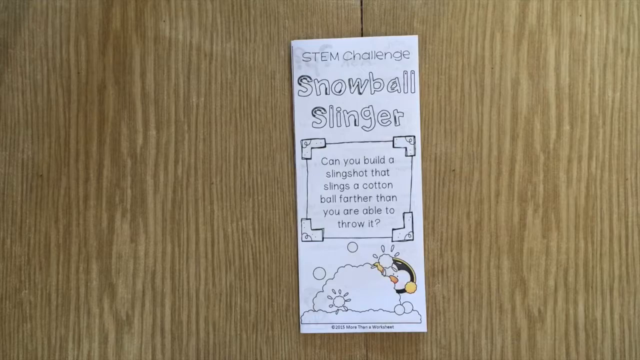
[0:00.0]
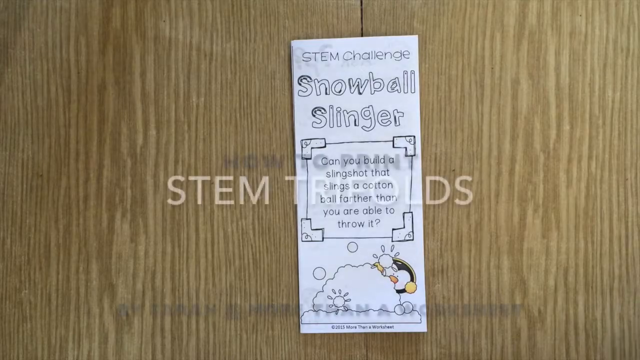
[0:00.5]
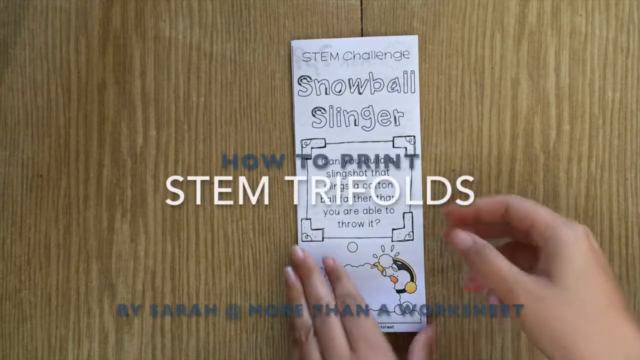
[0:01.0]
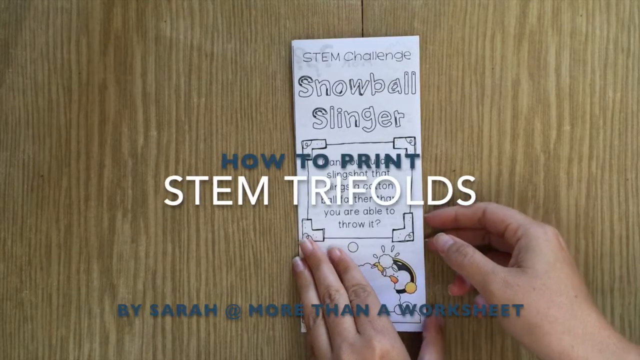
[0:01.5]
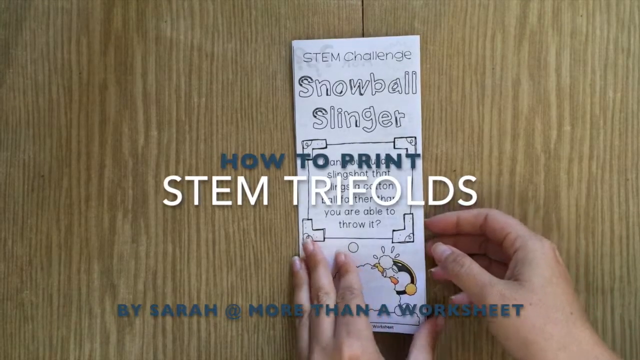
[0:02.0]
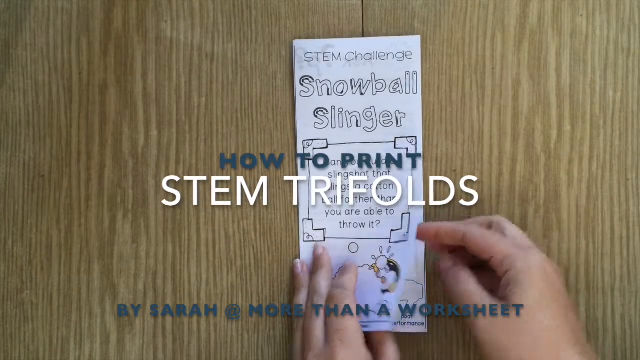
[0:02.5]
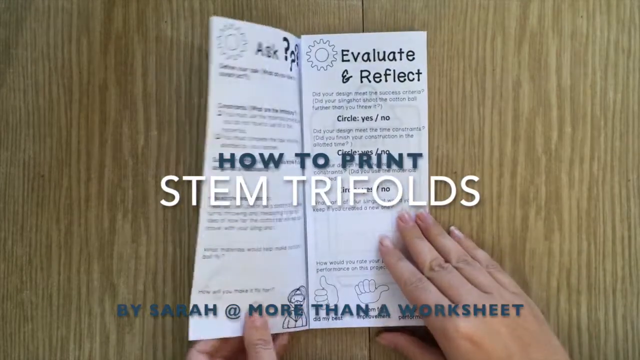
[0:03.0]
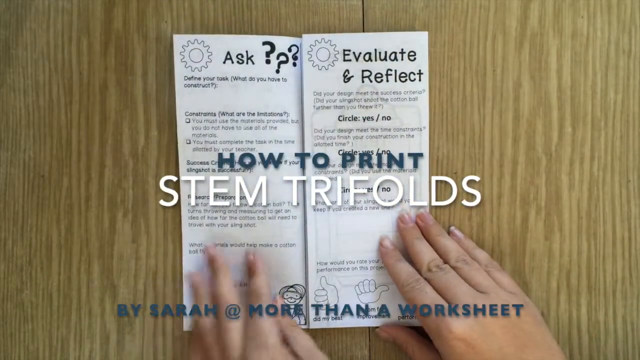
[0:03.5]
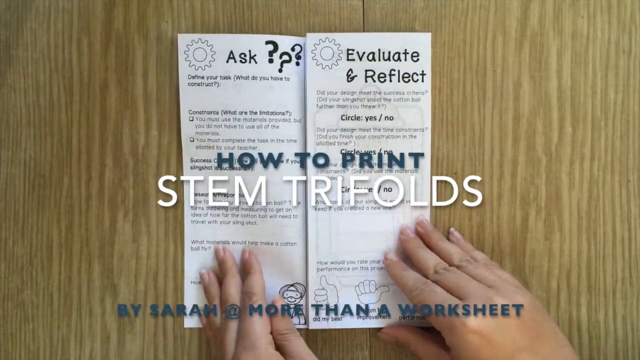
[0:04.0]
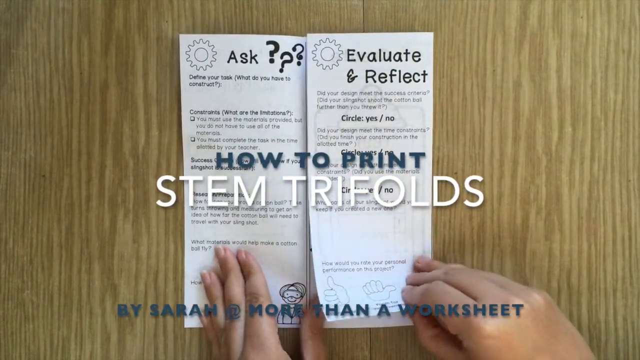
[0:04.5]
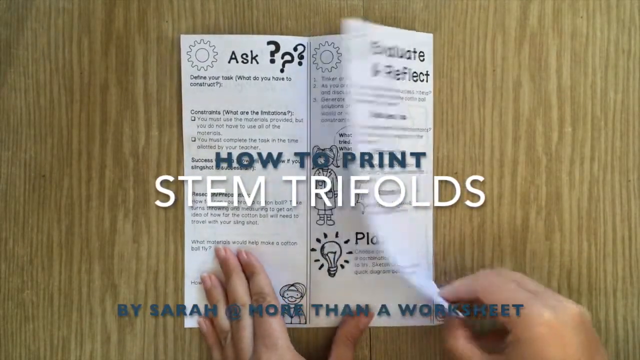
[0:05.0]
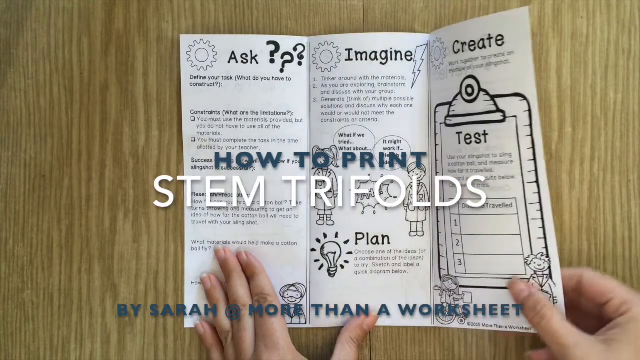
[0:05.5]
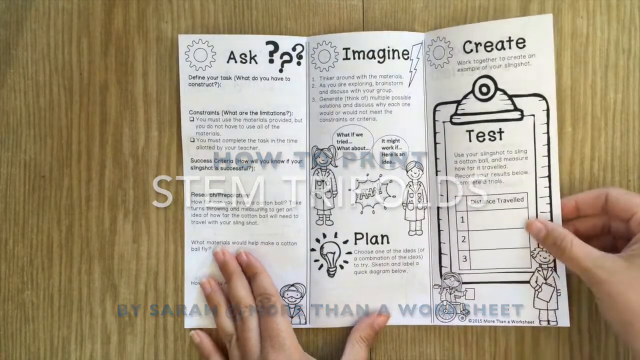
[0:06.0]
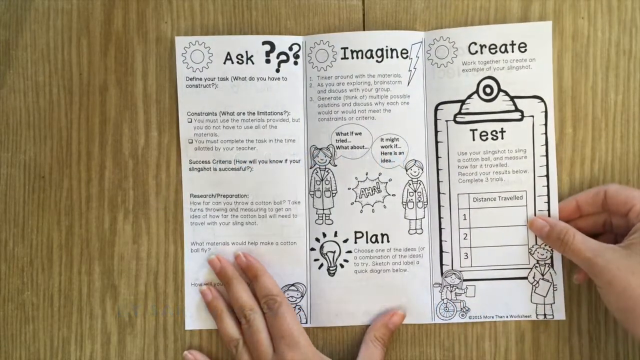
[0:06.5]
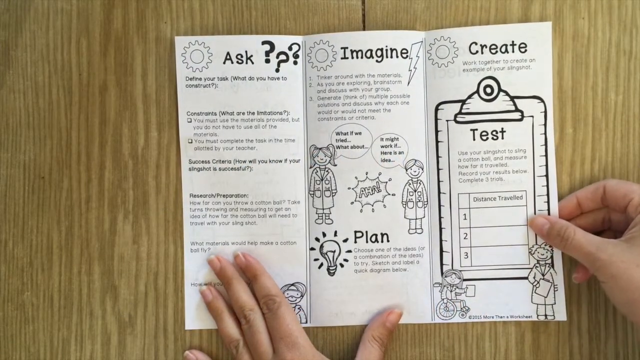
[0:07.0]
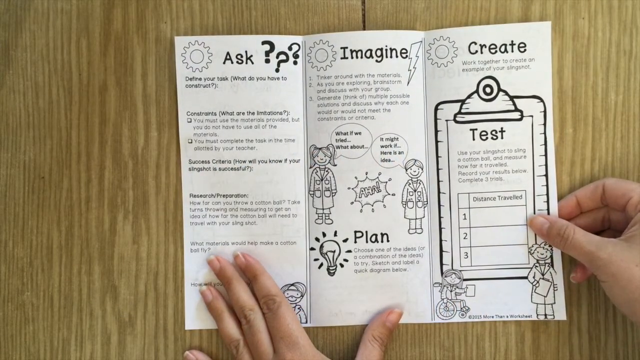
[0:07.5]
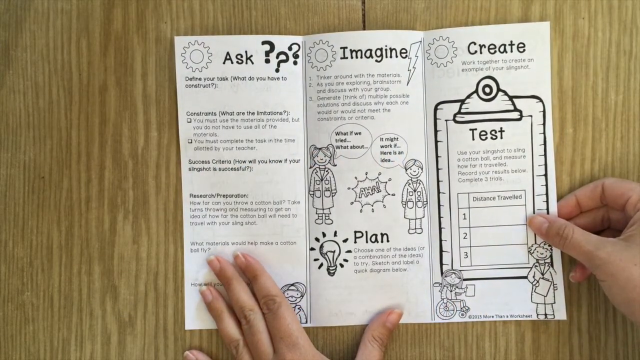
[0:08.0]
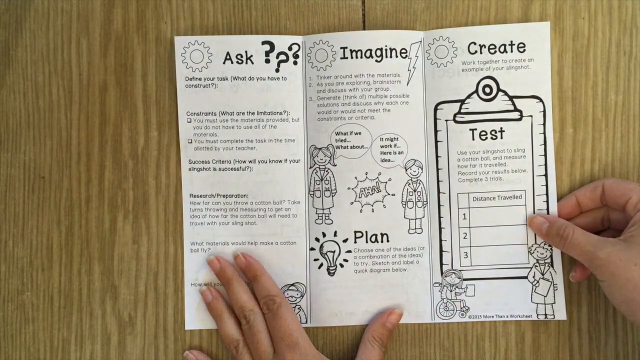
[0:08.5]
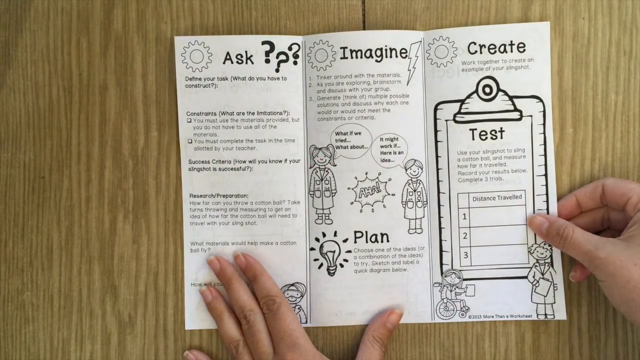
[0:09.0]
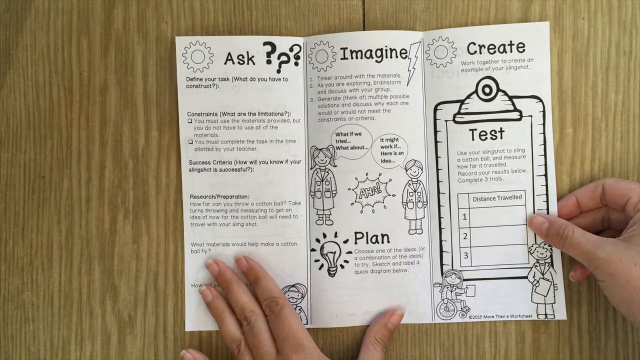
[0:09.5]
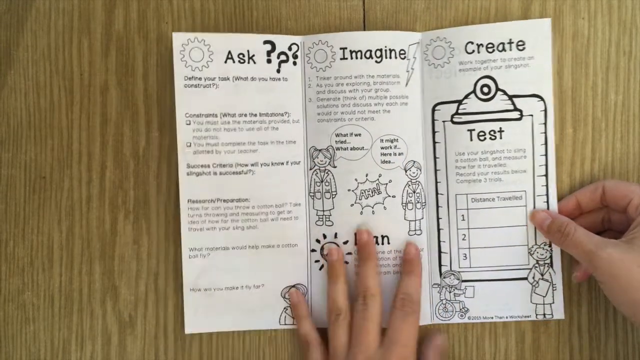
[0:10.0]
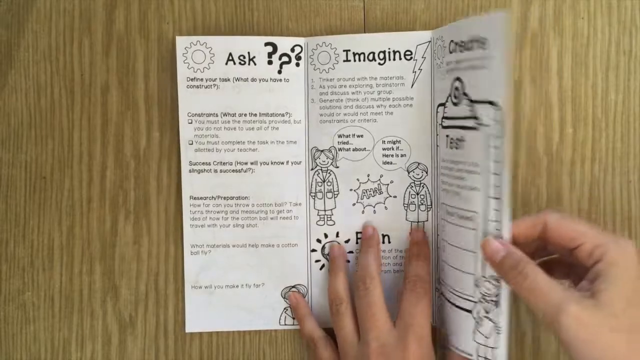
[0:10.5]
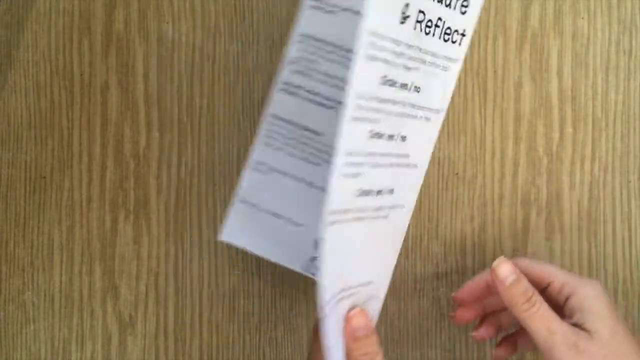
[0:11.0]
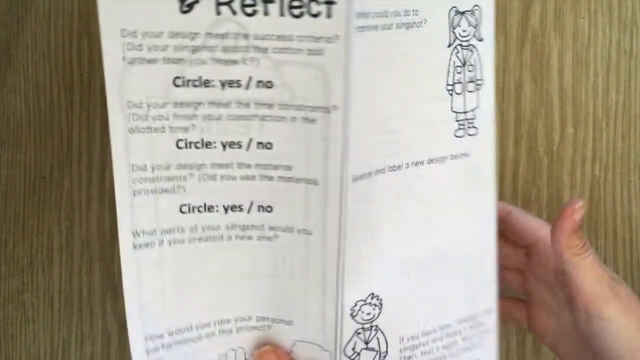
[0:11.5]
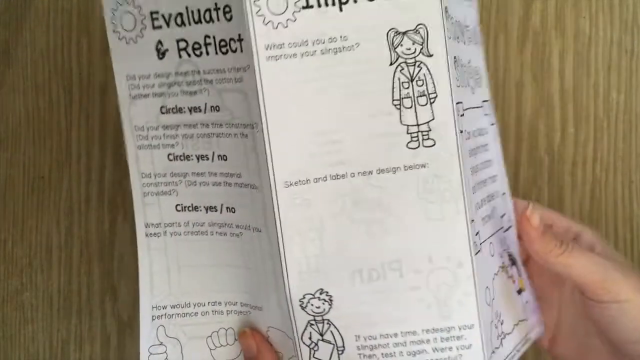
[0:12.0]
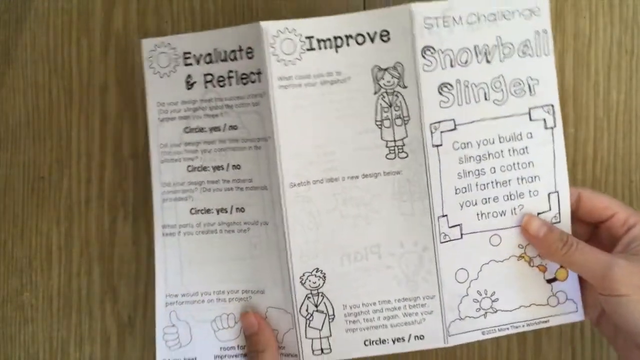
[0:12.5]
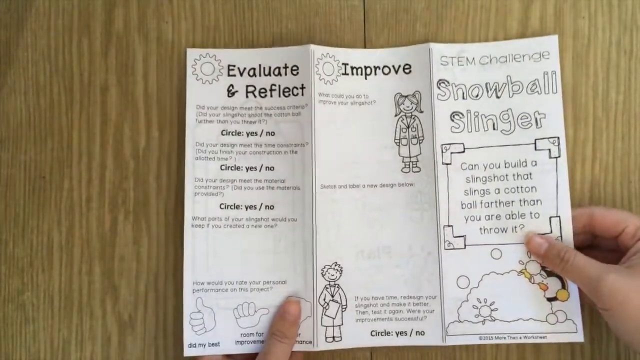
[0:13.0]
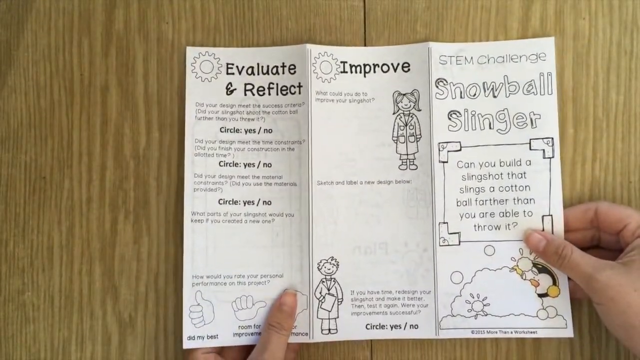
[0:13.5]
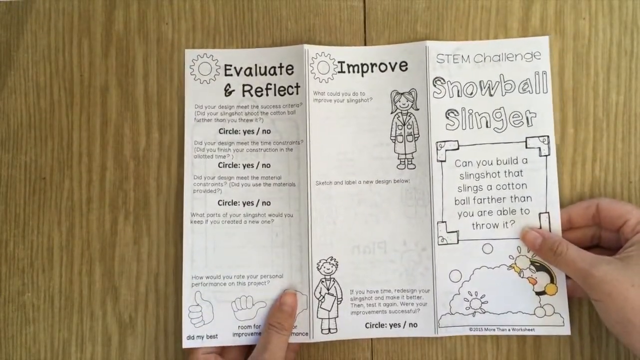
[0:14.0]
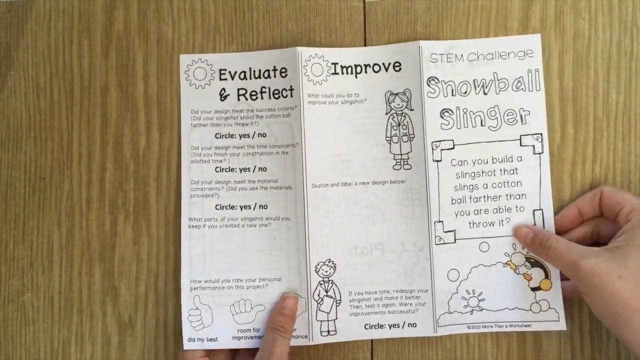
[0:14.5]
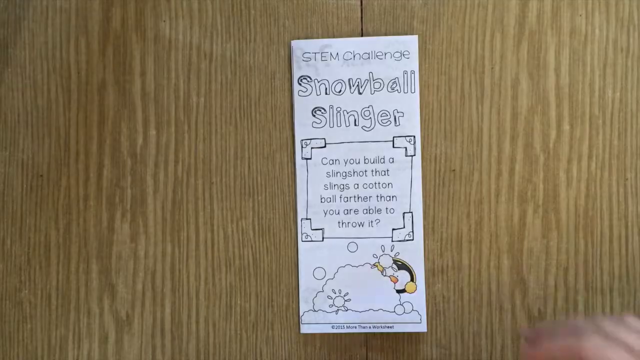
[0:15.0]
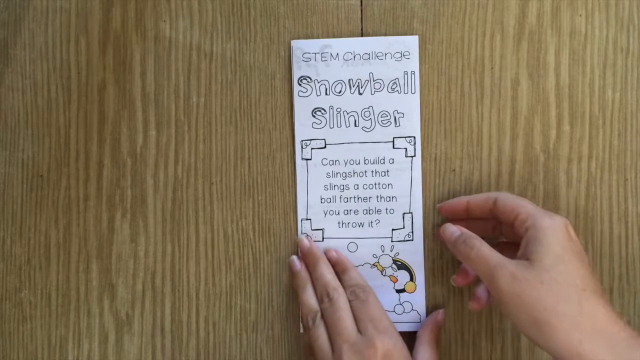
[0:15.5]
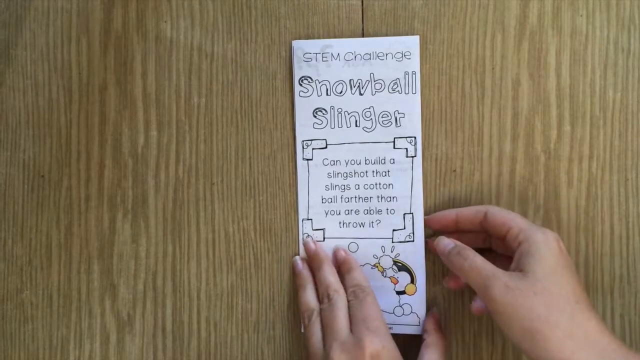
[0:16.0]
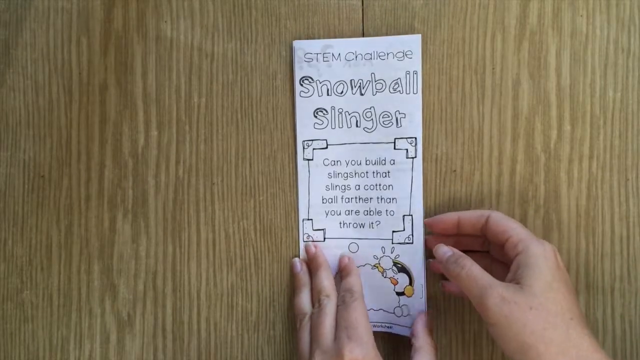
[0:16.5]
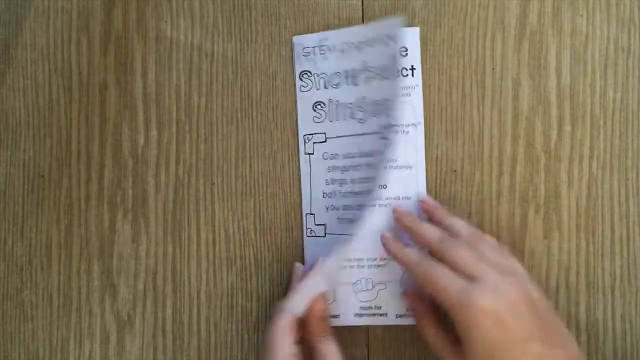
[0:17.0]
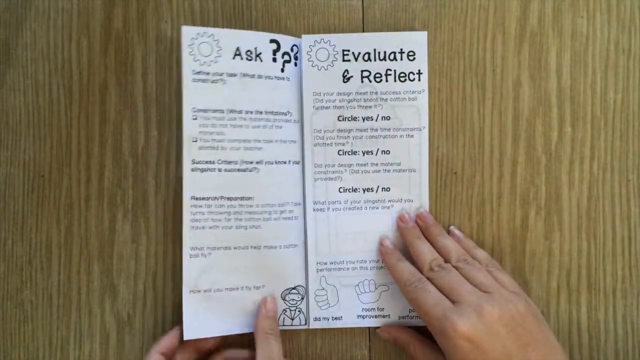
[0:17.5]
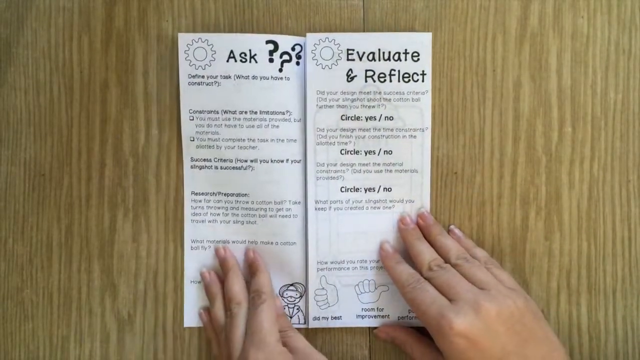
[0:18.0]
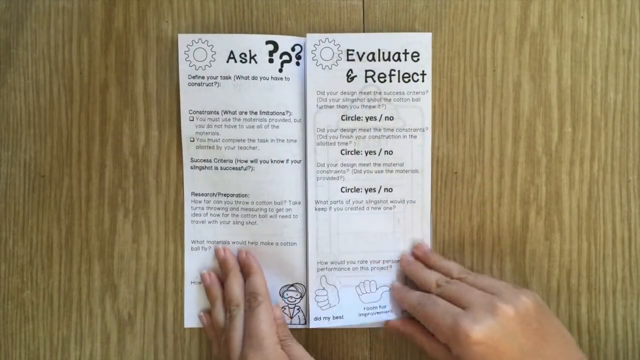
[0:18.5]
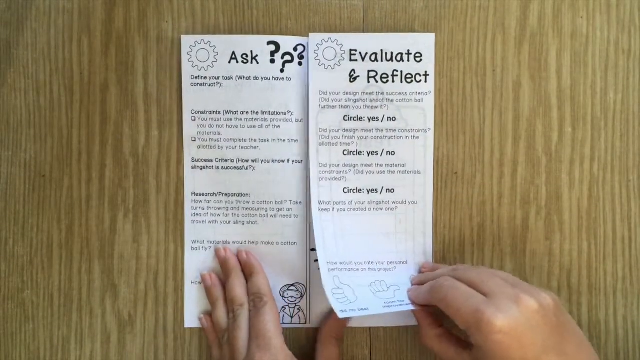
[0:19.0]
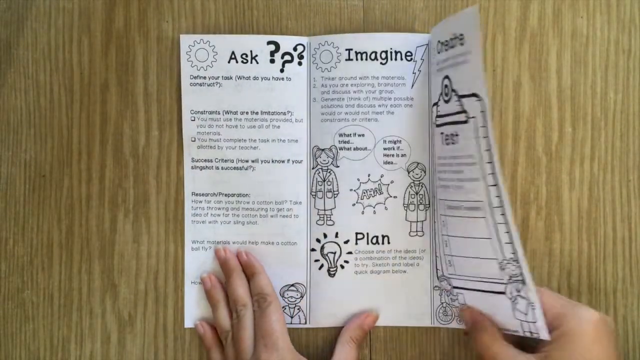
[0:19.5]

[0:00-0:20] A paper snowball slinger activity is shown, with text reading "can you build a slingshot that slings a cotton ball farther than you are able to throw" and labelled as a "team challenge." A girl with long nails opens it, revealing sections for "ask," "imagine," and "create," including a test section, along with drawings of plants and other things. She flips the paper to the other side, which shows "evaluate" and "reflect," three "circle yes, no" prompts, and "improve." The words "team challenge" and "snowball slingers" appear, along with some figures of women. Parts of the sheet include items like ask, construction, a test, and distance traveled, as well as images and tables to fill in for tests.